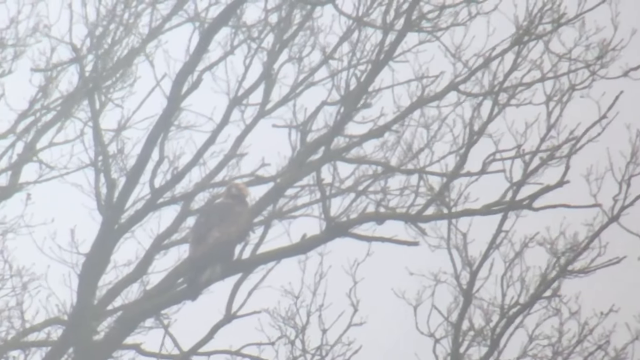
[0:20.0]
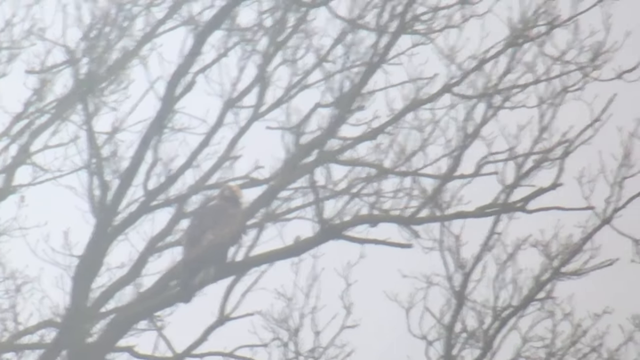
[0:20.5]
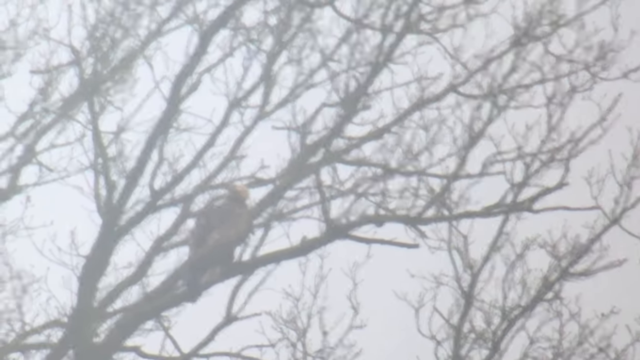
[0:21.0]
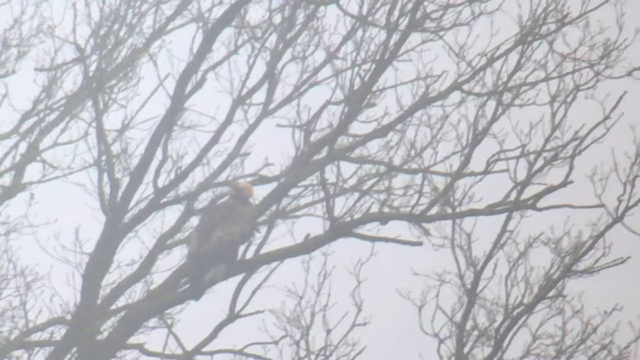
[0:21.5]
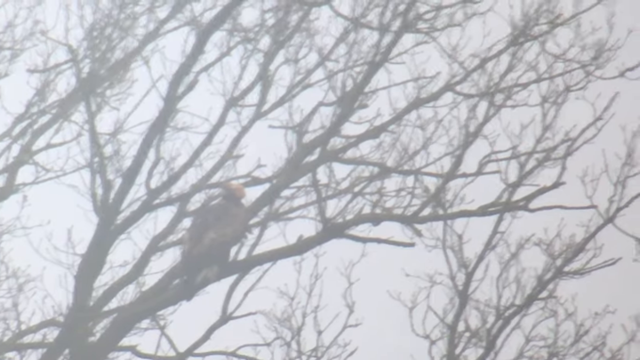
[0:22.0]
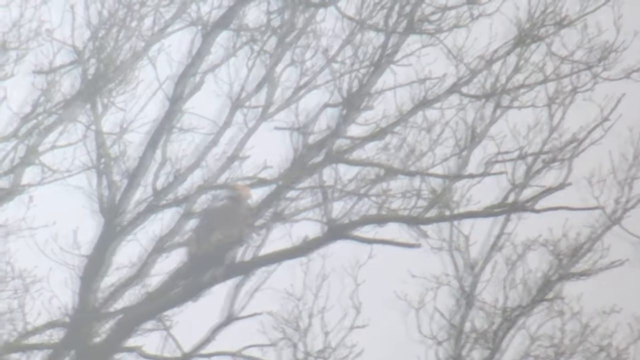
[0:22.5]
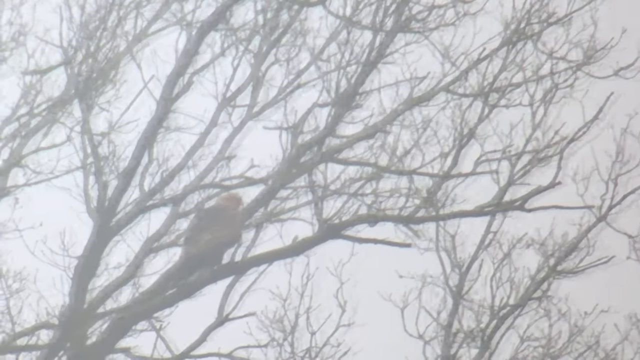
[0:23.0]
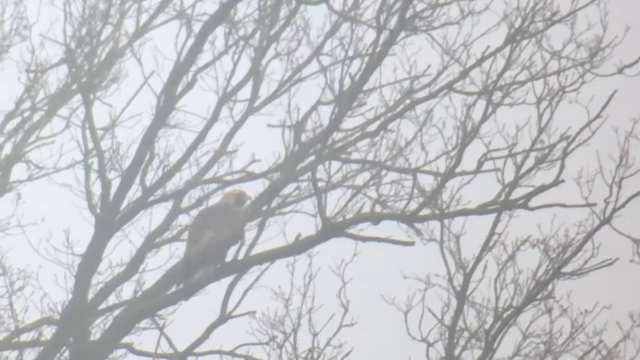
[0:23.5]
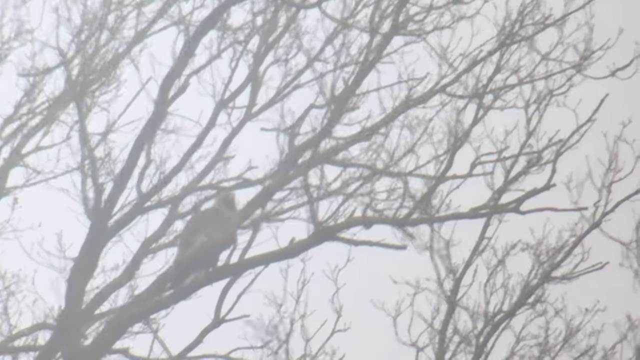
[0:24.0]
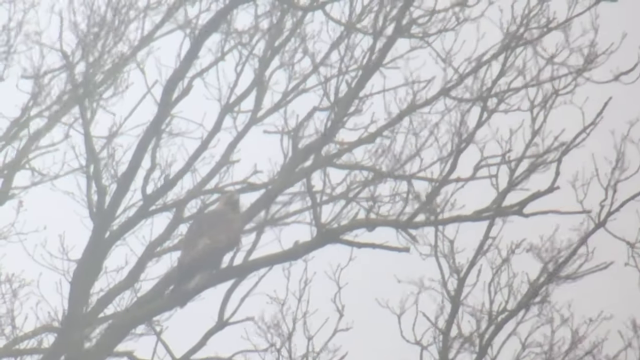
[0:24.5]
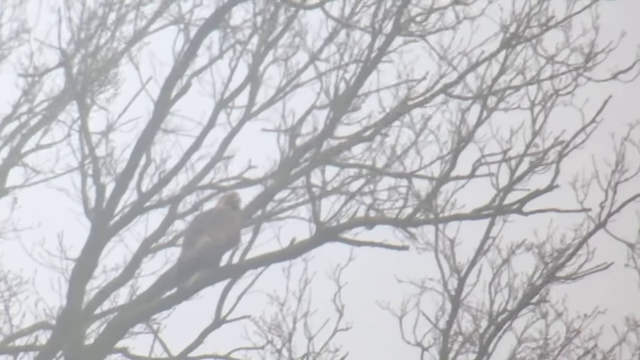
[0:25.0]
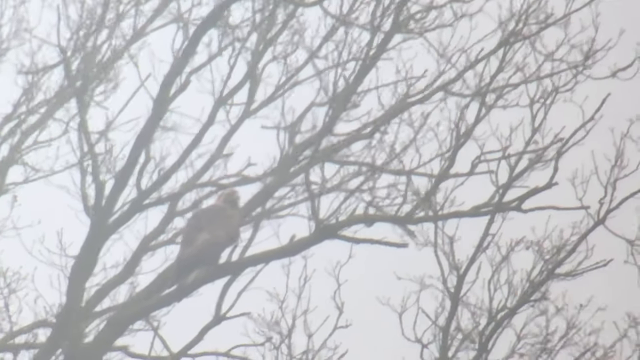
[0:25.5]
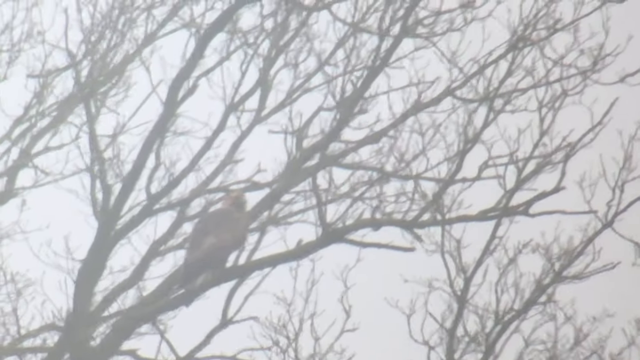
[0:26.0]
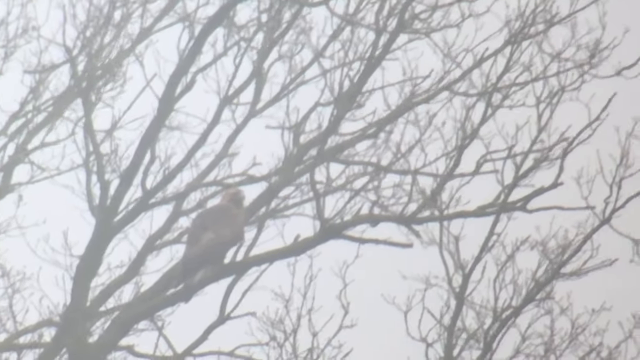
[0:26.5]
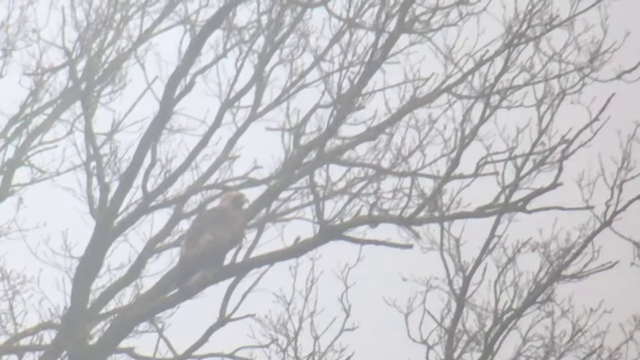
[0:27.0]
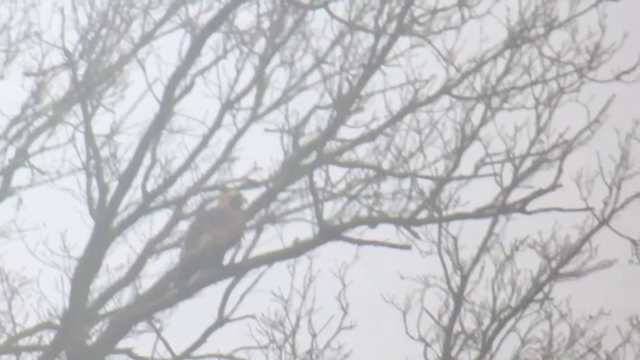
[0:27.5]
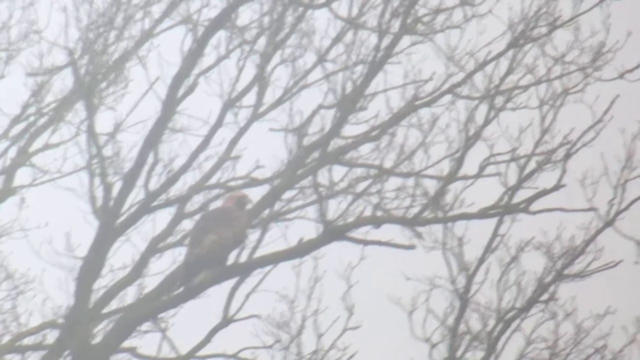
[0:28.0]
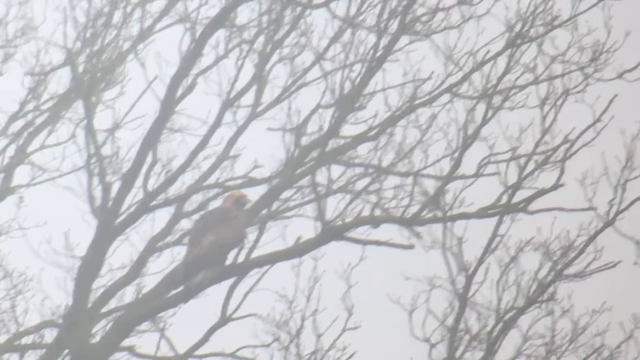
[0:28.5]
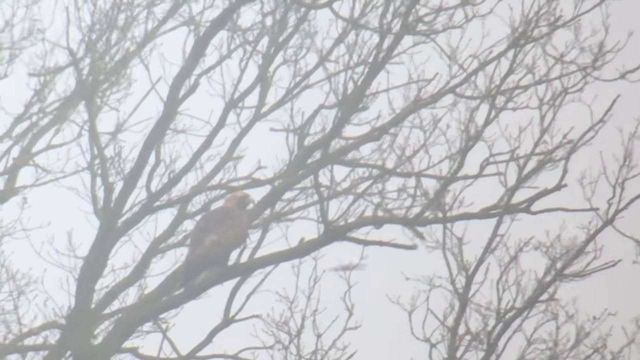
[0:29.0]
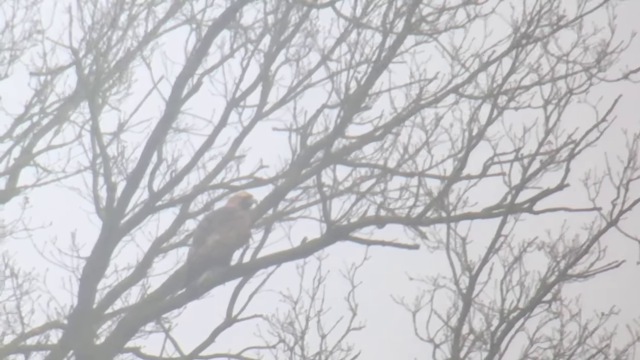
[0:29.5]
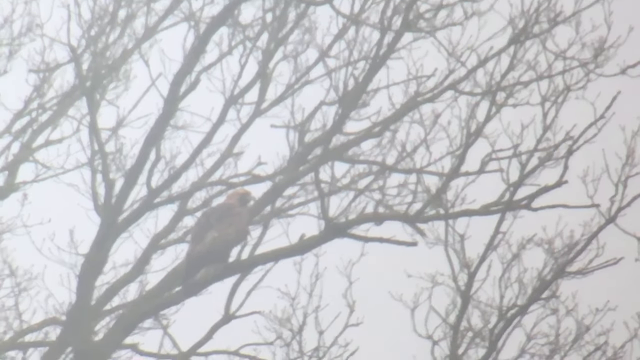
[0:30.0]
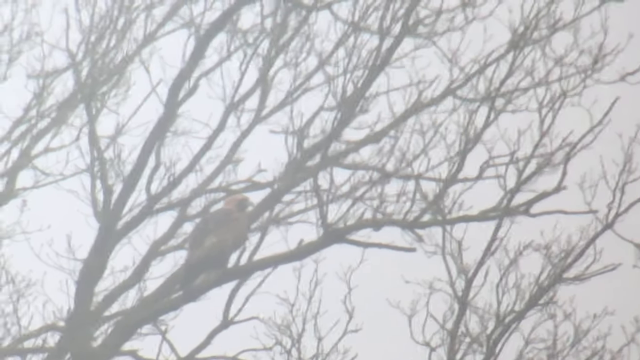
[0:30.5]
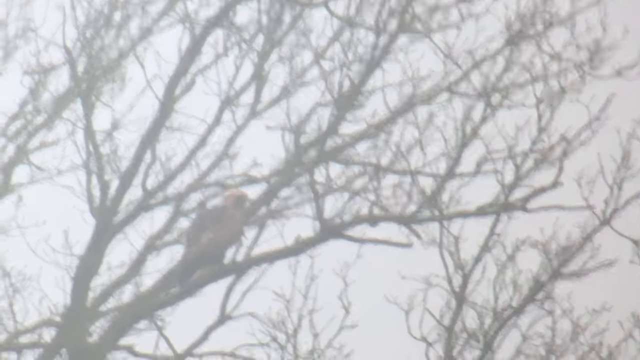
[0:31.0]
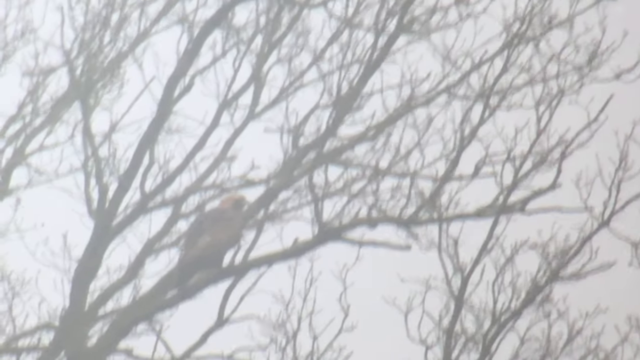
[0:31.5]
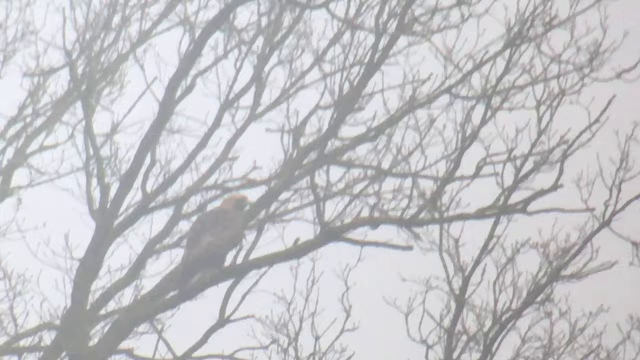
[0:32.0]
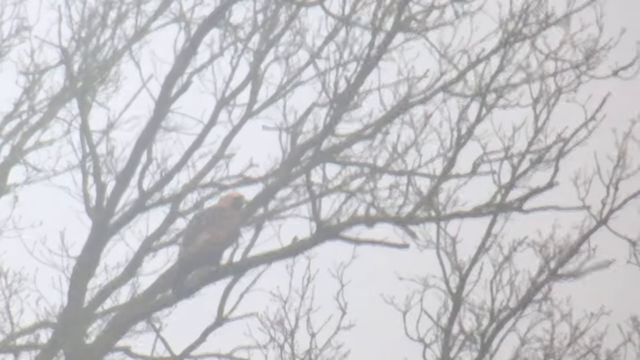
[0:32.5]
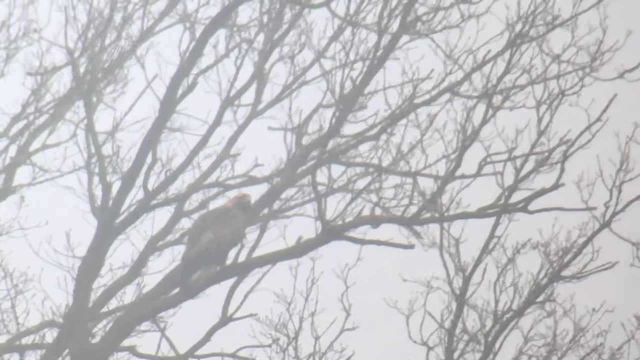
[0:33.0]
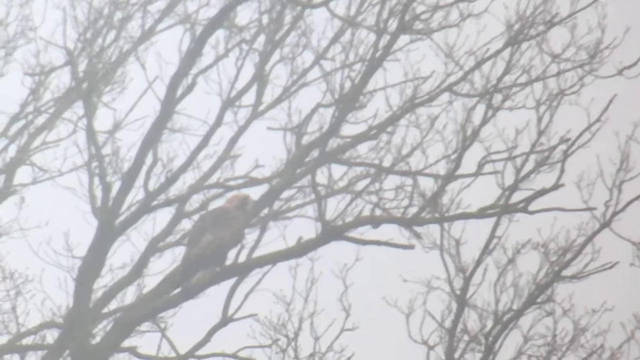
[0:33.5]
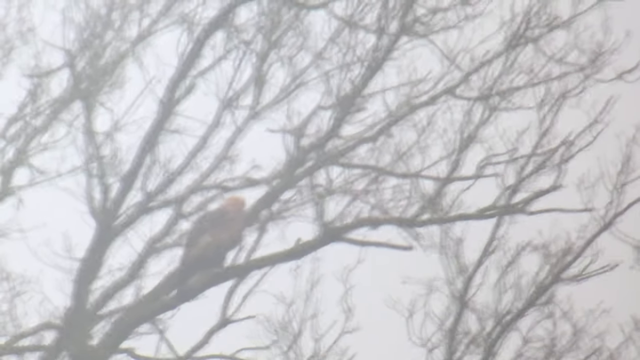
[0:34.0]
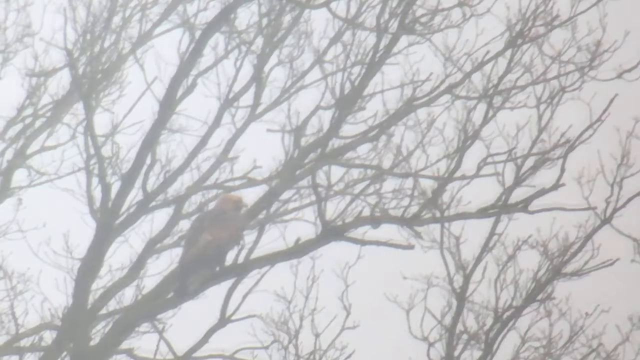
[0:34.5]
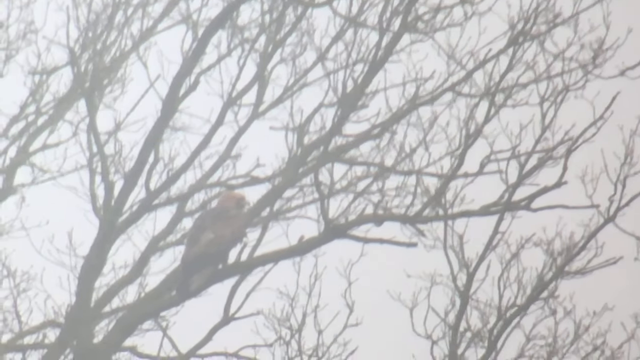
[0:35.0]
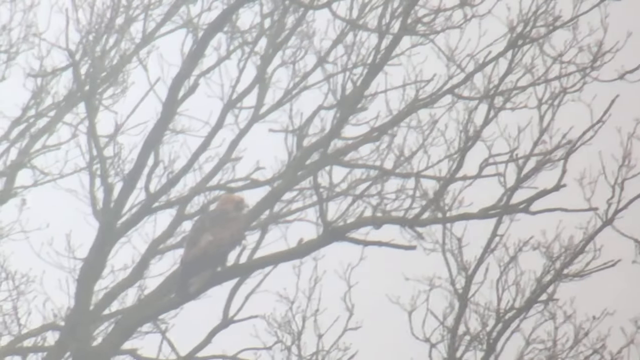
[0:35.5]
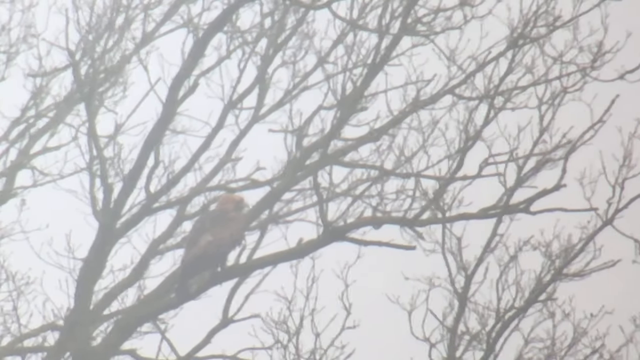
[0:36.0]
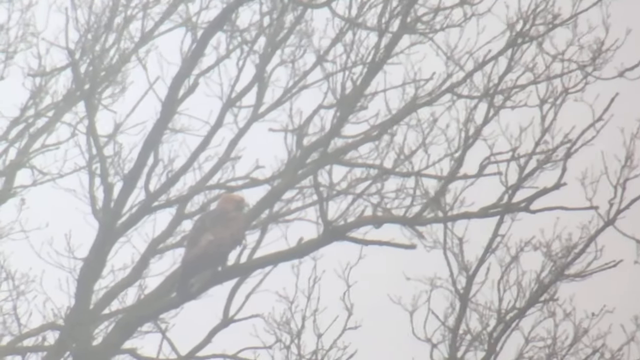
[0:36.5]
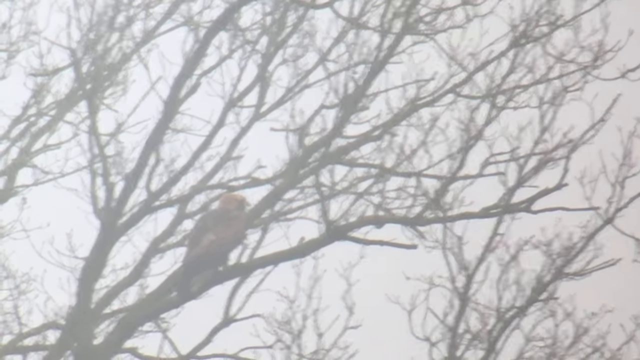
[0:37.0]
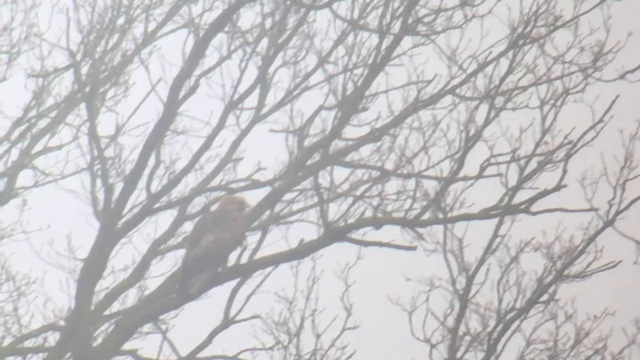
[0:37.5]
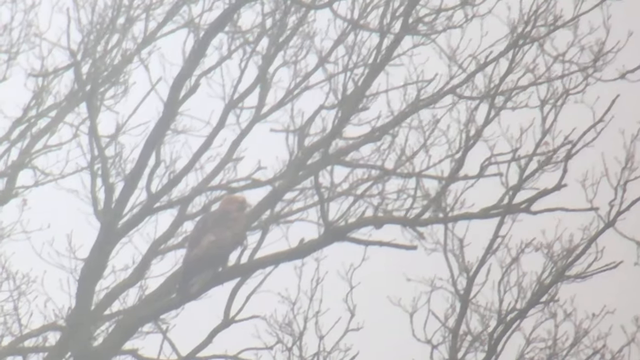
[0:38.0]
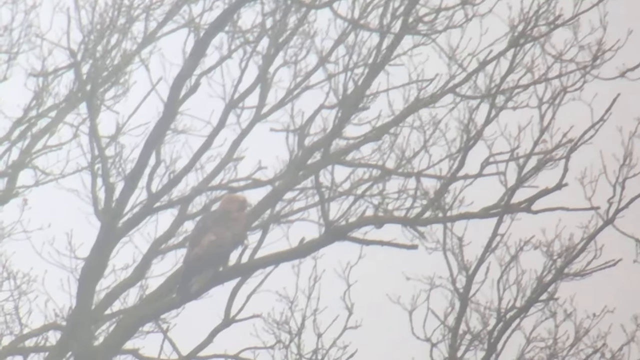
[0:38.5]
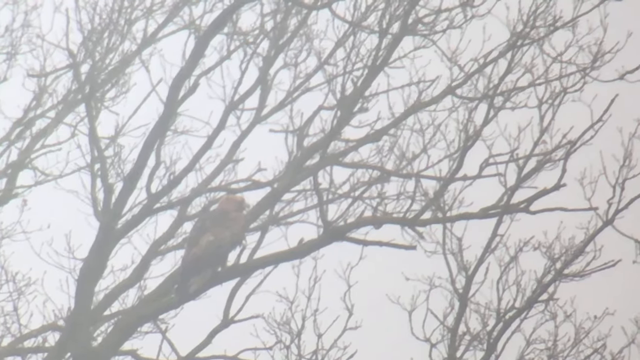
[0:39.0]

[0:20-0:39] The bird kind of spreads its wings a little and moves its head around, looking about while staying on one branch. The camera is still shaking badly, and the tree is moving, apparently from a strong wind. It is daytime but really cloudy and misty looking. The brown bird looks pretty big compared to the tree and might be an eagle or some type of big hawk.